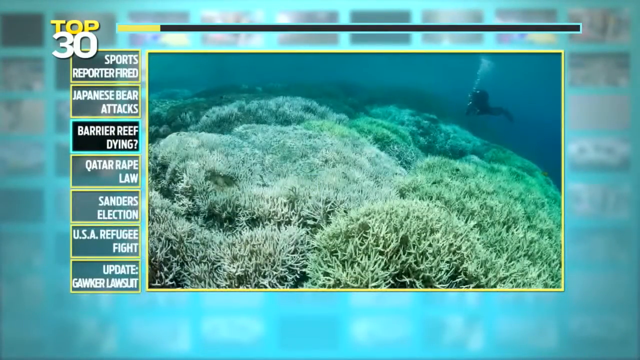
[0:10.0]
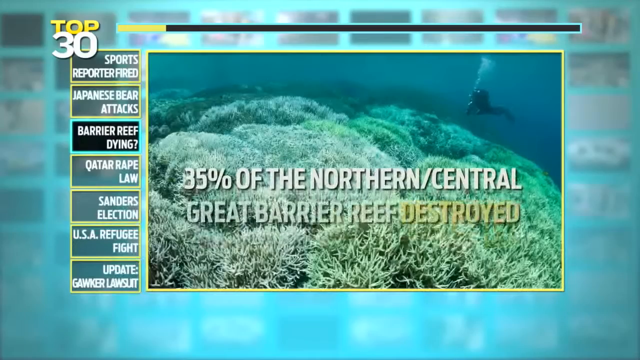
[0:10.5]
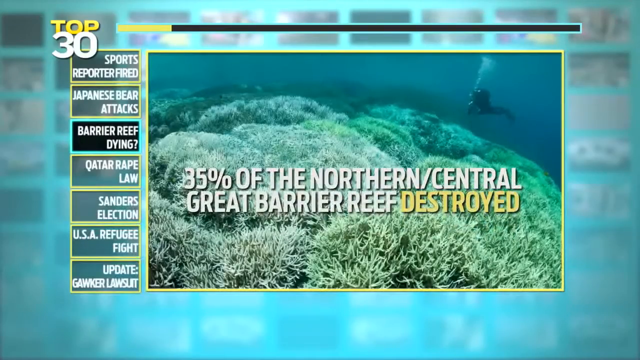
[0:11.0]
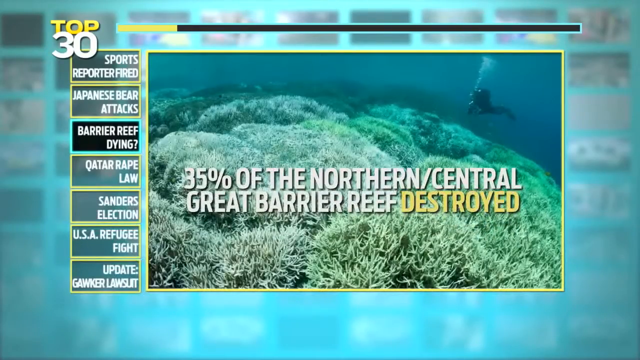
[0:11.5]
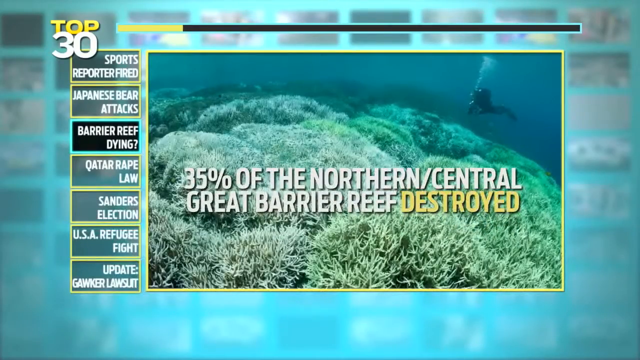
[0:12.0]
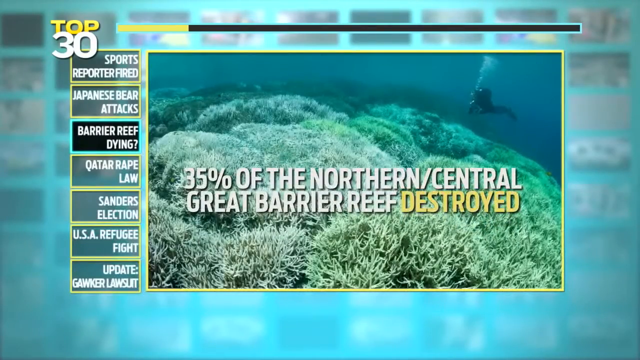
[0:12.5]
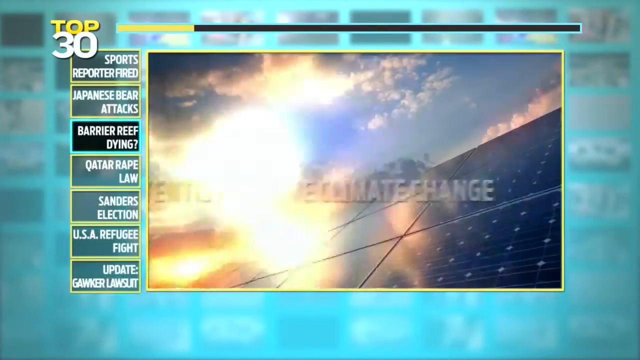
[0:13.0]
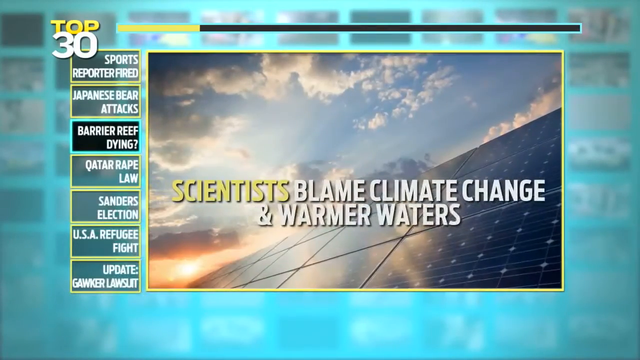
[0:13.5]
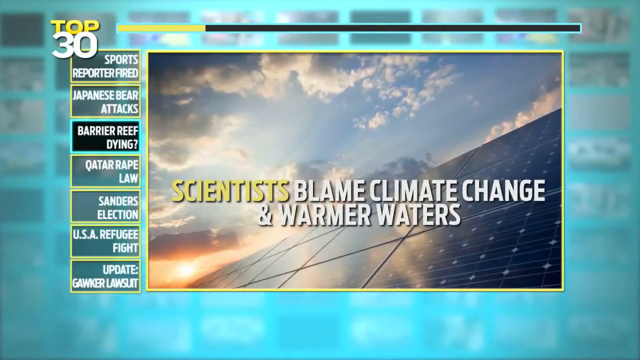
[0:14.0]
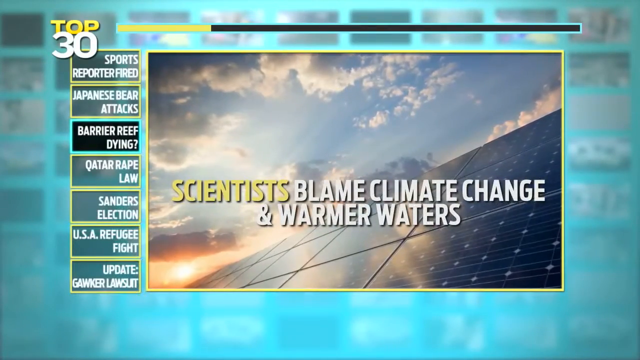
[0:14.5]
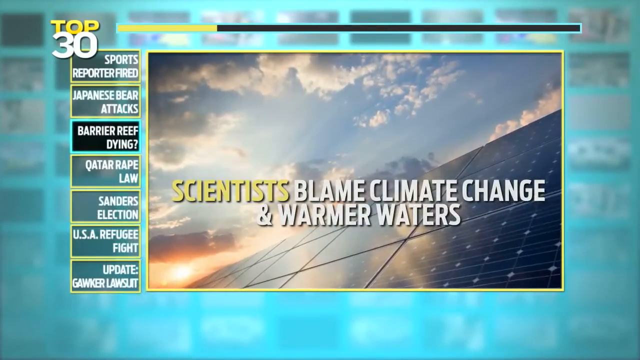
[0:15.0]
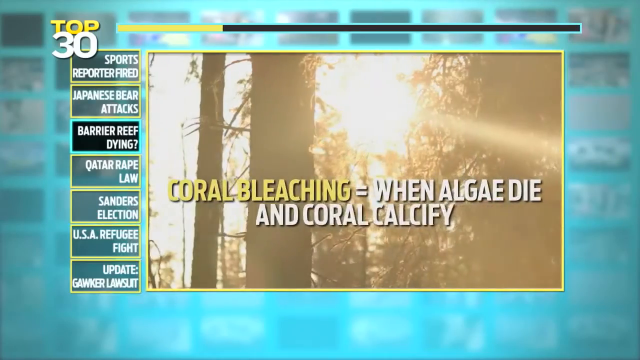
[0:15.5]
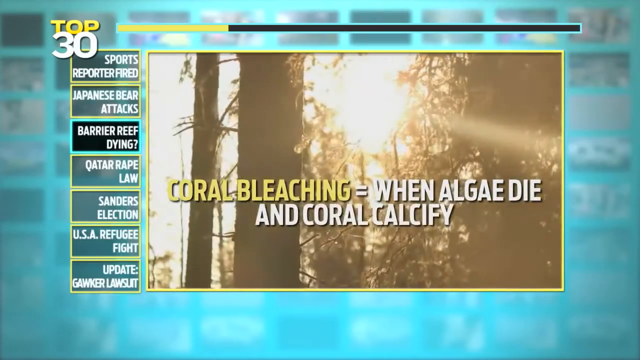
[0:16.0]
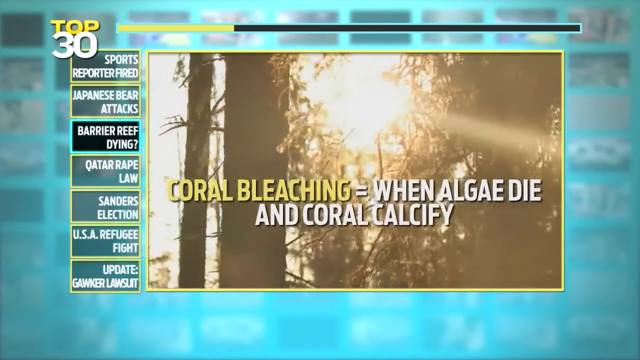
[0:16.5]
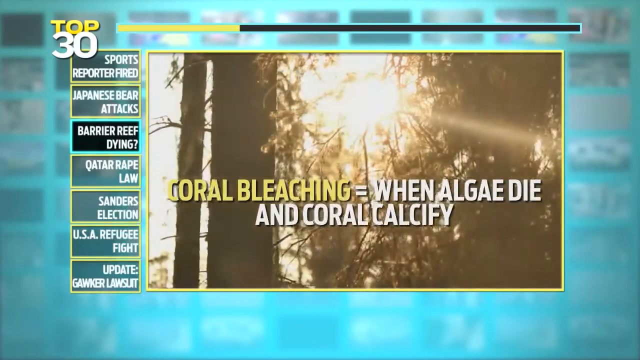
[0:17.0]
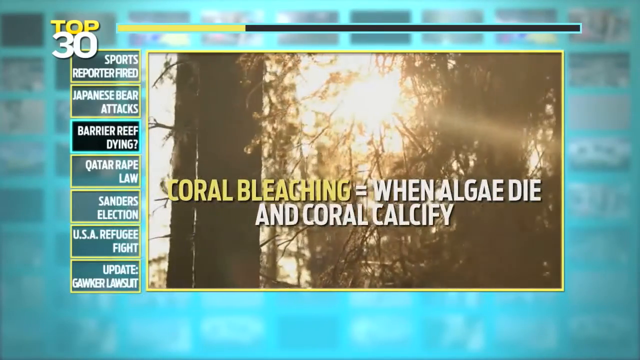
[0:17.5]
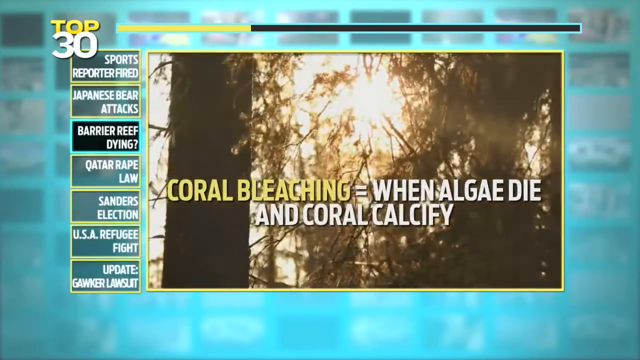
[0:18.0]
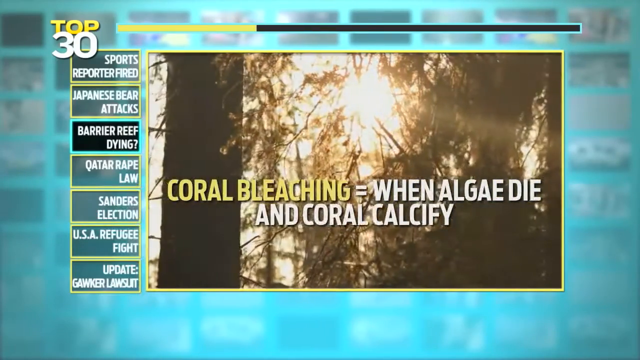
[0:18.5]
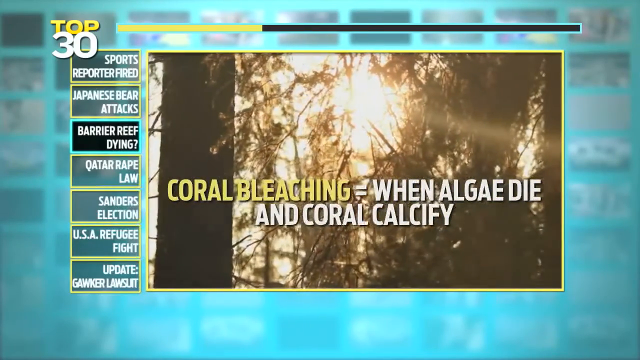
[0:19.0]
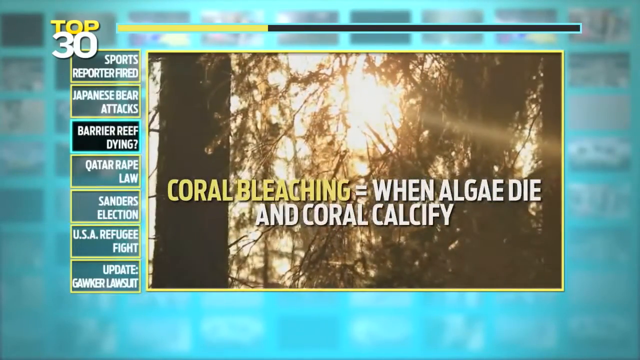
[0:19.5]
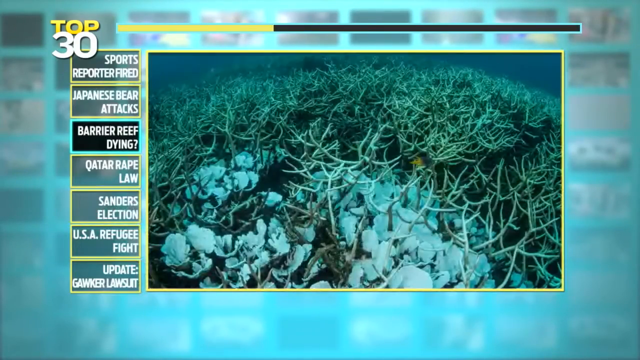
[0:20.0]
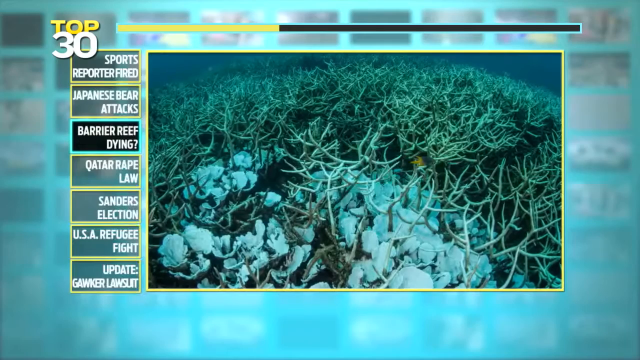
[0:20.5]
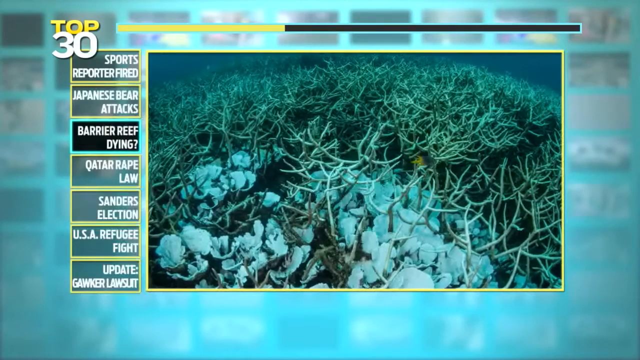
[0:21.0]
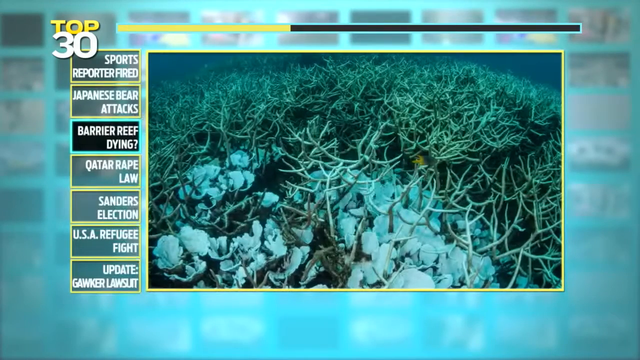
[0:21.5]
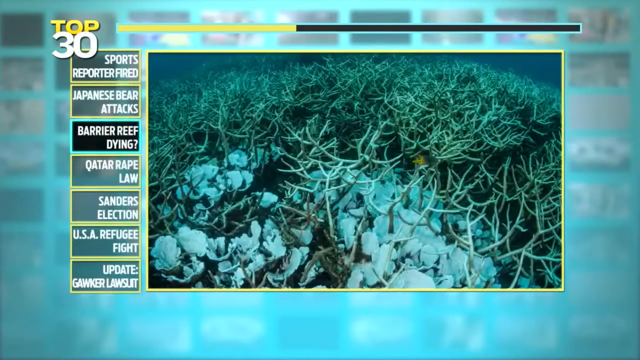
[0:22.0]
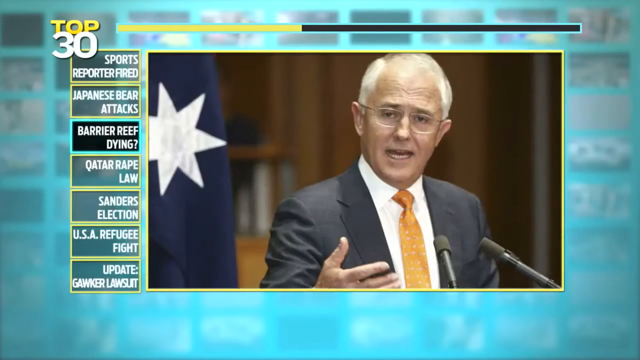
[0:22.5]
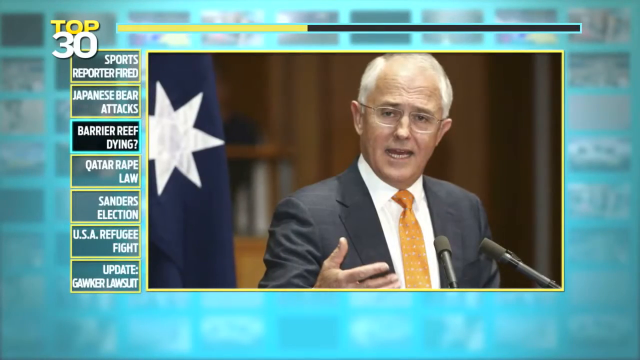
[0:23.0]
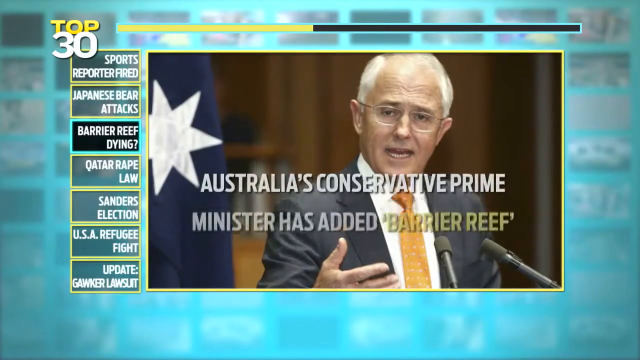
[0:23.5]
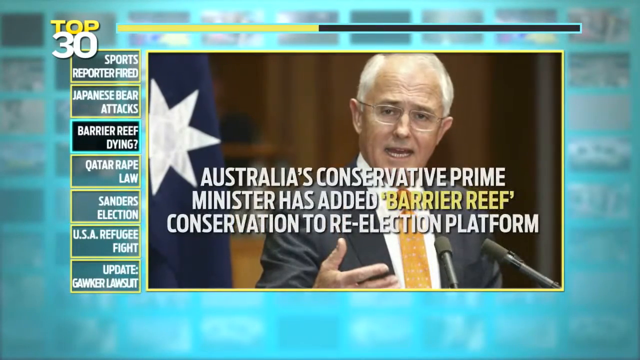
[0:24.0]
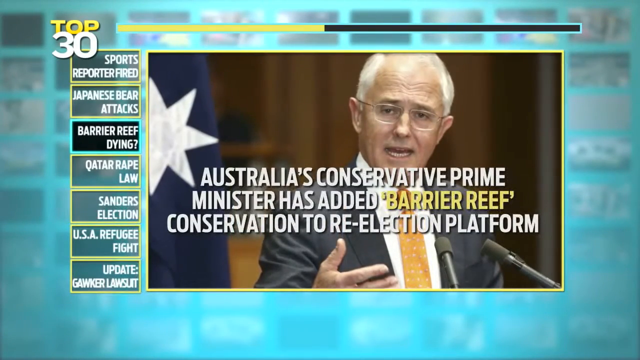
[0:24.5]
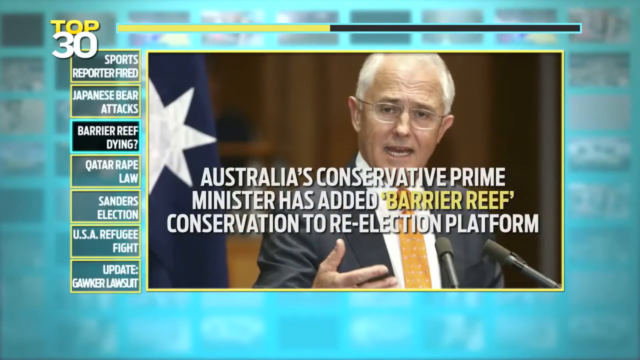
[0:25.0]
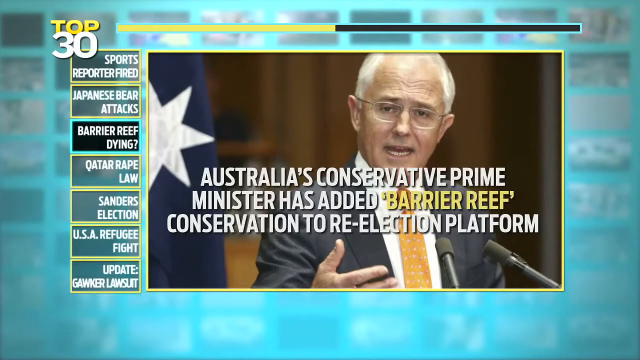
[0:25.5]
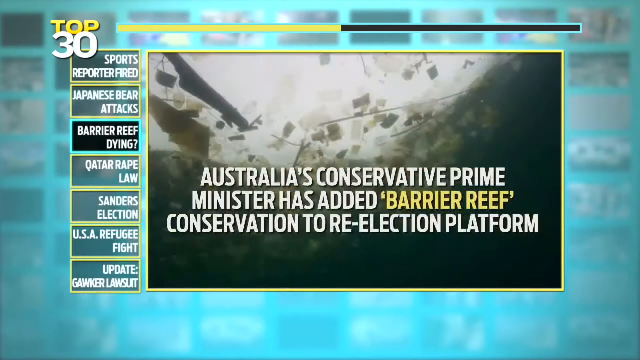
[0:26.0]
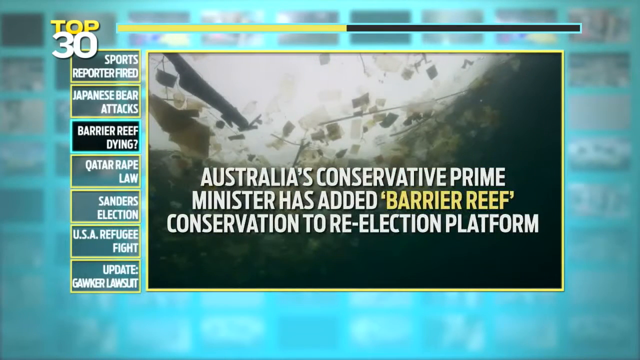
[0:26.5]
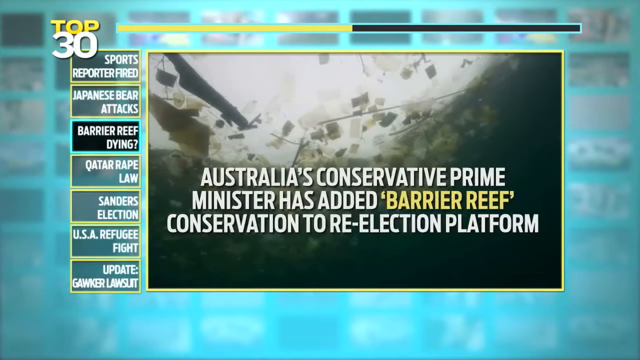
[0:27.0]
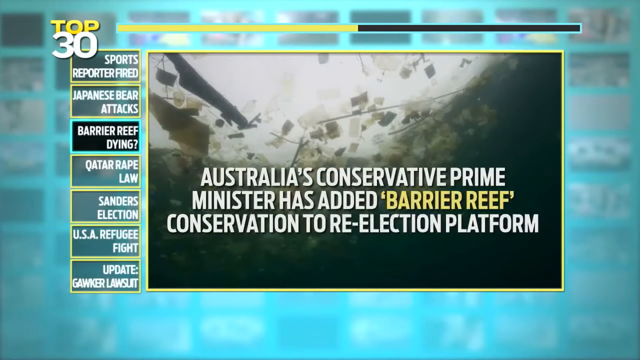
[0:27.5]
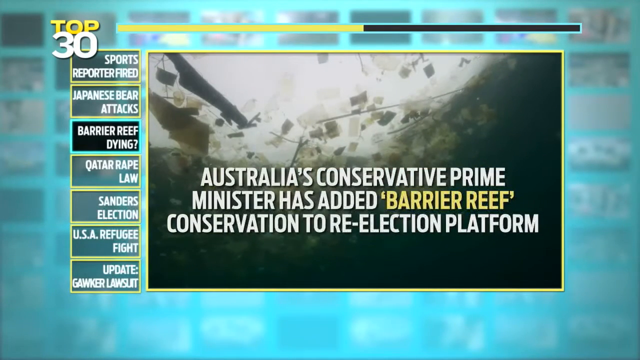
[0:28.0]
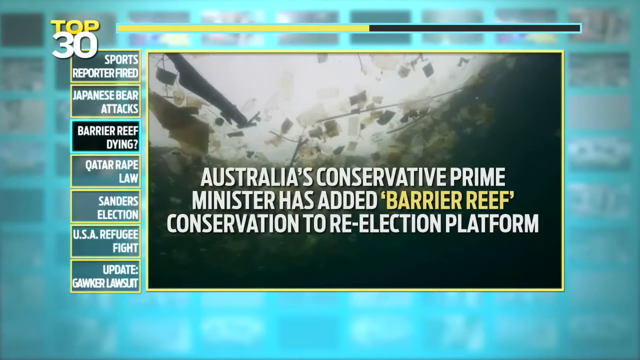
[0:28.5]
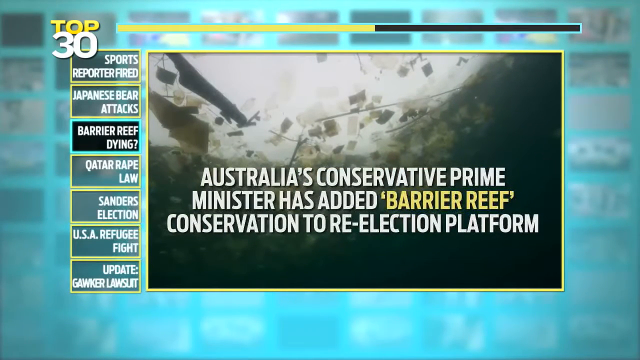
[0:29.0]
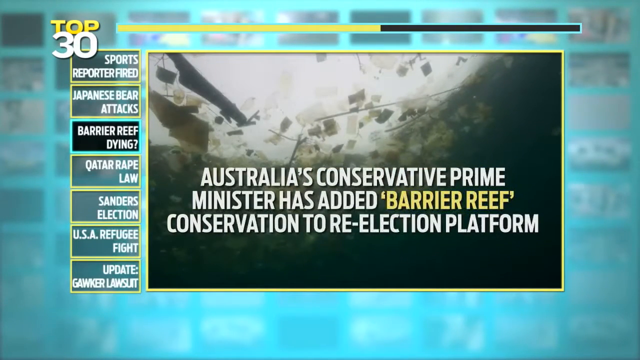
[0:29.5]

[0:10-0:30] Statistics appear on screen: "35 percent of the northern central great barrier reef destroyed", in yellow. A light burst appears, and the video continues with text reading "scientists" in yellow, then "blame climate change" and "warmer waters", over clouds all around and the sun setting at the bottom left in an orange color, with solar panels in front. The camera pans from left to right across woods, with the sun peeking through. In the middle, text reads "coral bleaching" in yellow, "equal when algae die", and on a second line "and coral calcify". Throughout, a progress bar shows how much is left; at this point it is about halfway. Next is what looks like the bottom of the ocean, with twigs interlined and white parts that are possibly calcium deposits. Then the minister of Australia appears, an older man with glasses and an orange tie, speaking and using his right hand, with a flag with a star to his left. The next shot looks up from just underneath the surface of the water at what look like papers and trash floating on top, with text reading "Australia's conservative prime minister has added barrier reef conservation to a re-election platform", with "barrier reef" in yellow.